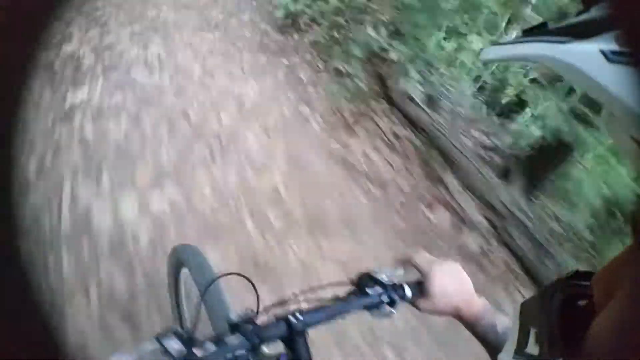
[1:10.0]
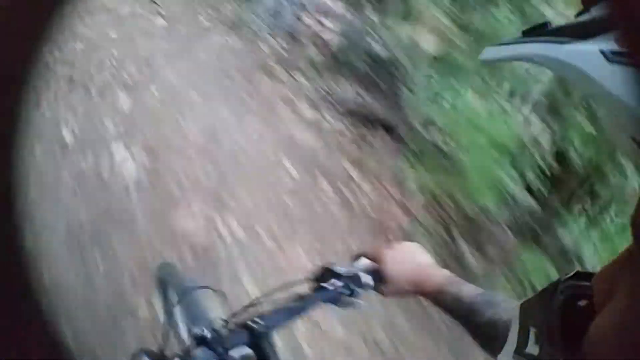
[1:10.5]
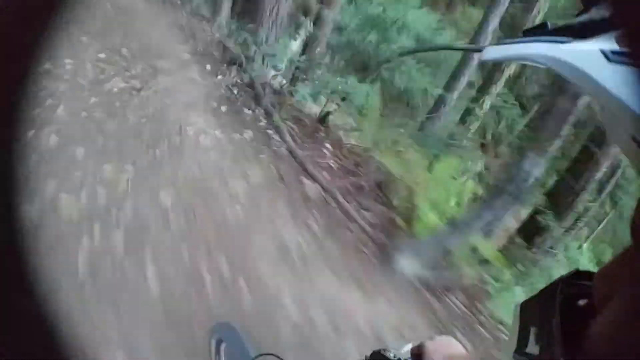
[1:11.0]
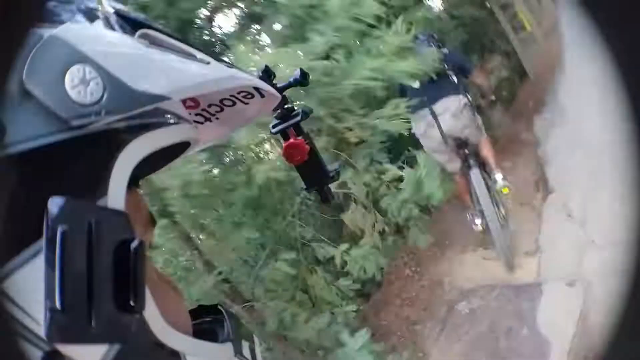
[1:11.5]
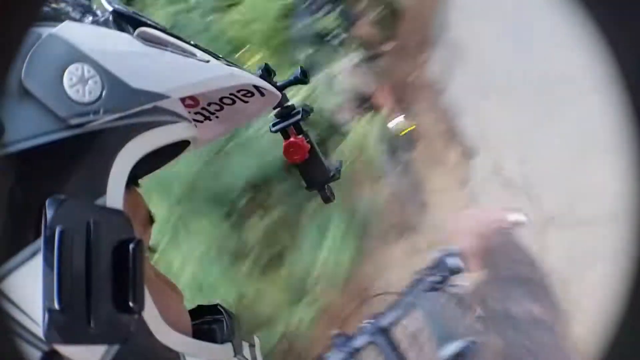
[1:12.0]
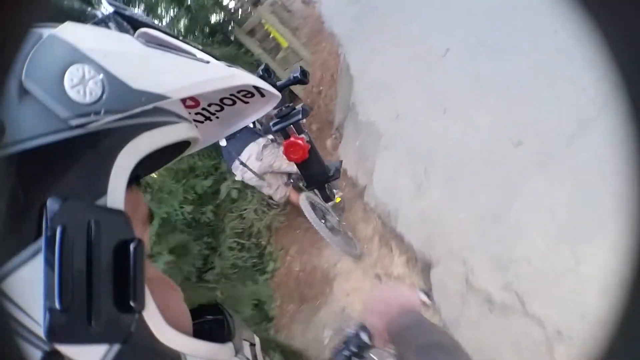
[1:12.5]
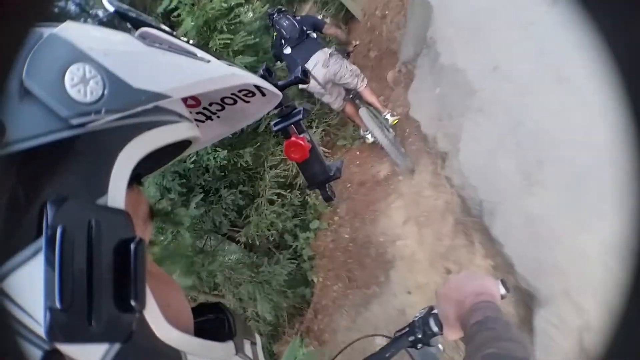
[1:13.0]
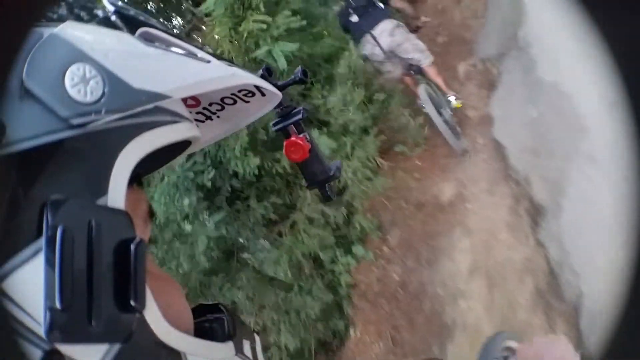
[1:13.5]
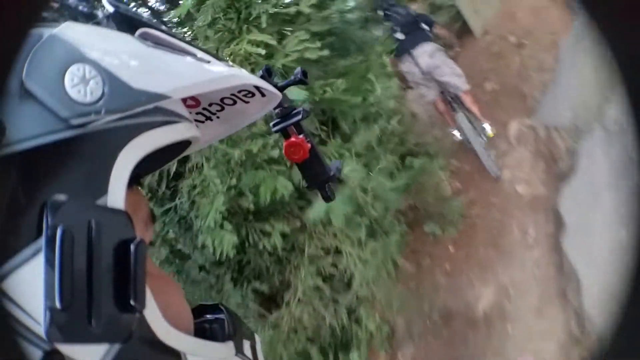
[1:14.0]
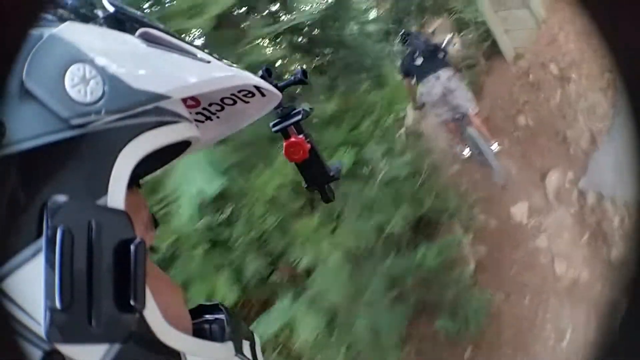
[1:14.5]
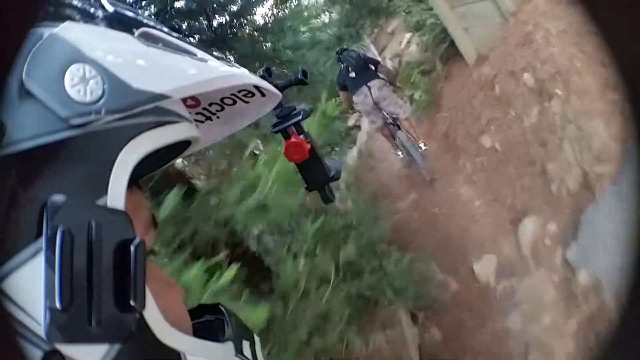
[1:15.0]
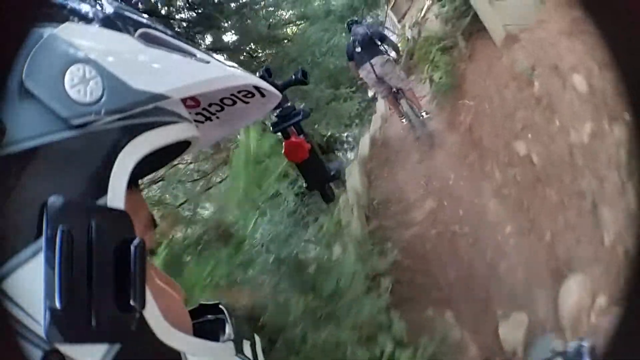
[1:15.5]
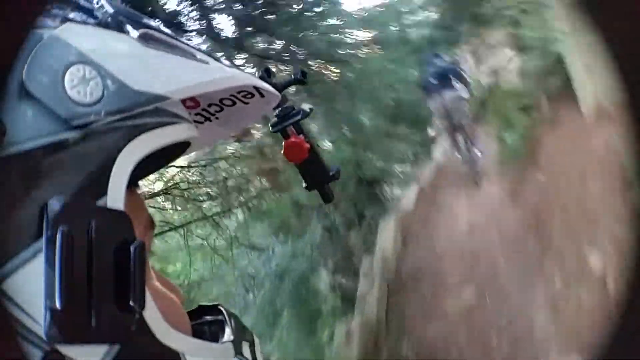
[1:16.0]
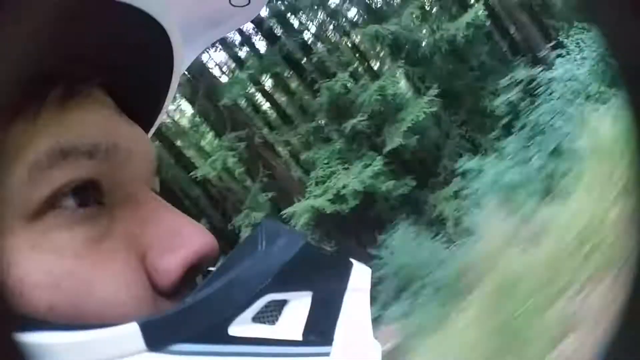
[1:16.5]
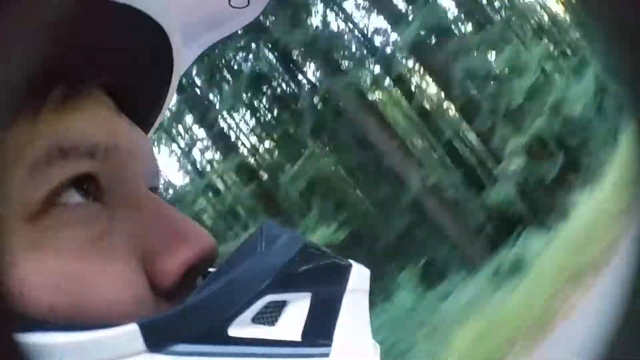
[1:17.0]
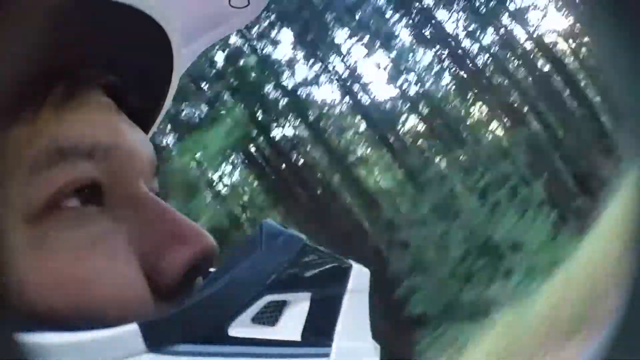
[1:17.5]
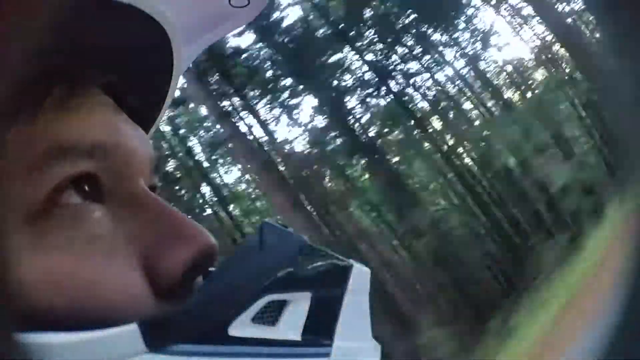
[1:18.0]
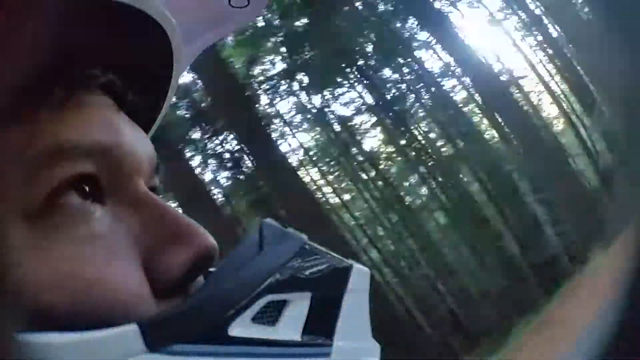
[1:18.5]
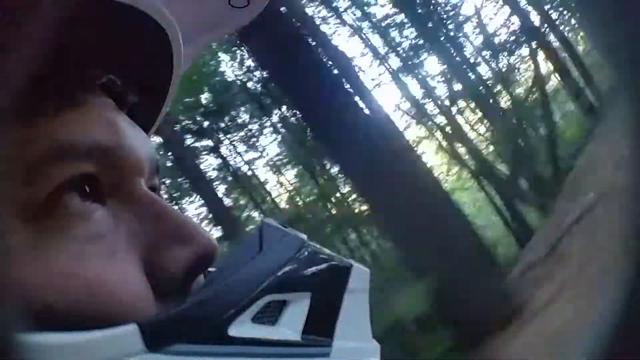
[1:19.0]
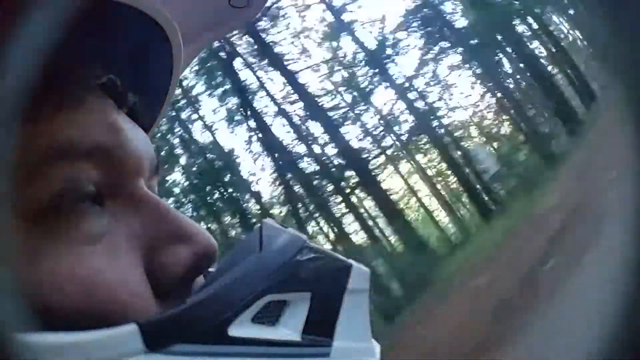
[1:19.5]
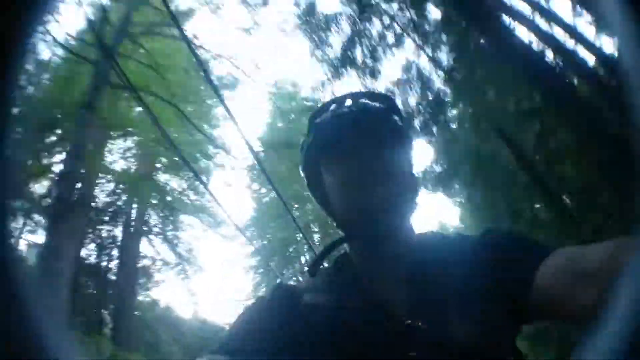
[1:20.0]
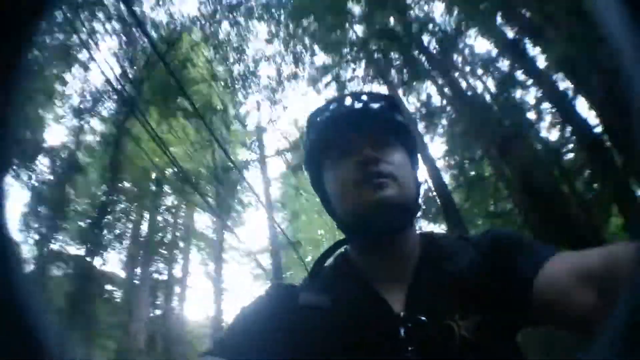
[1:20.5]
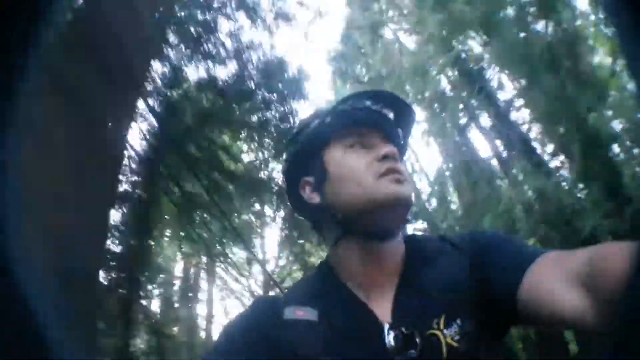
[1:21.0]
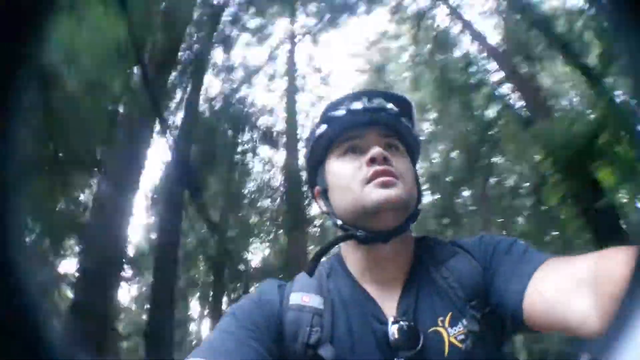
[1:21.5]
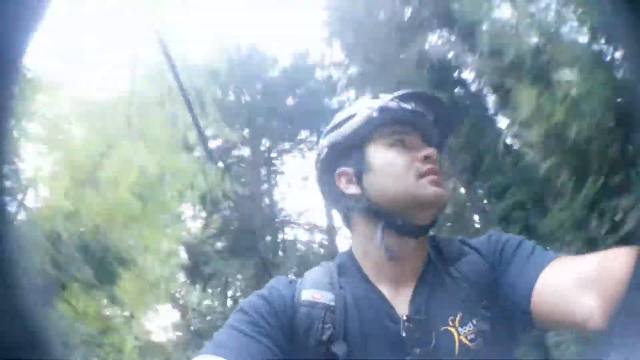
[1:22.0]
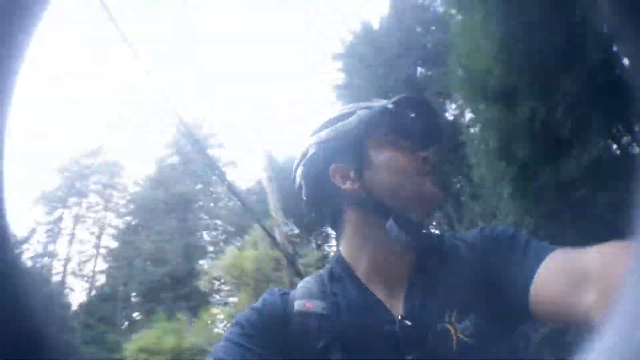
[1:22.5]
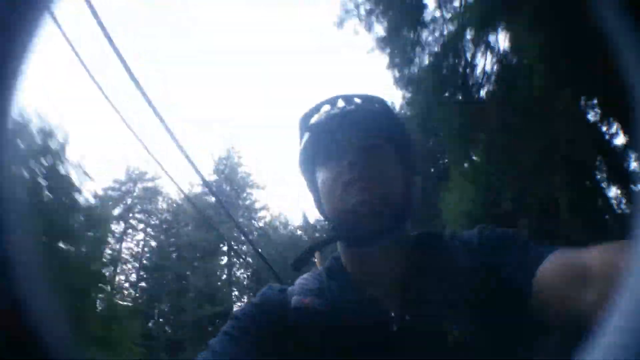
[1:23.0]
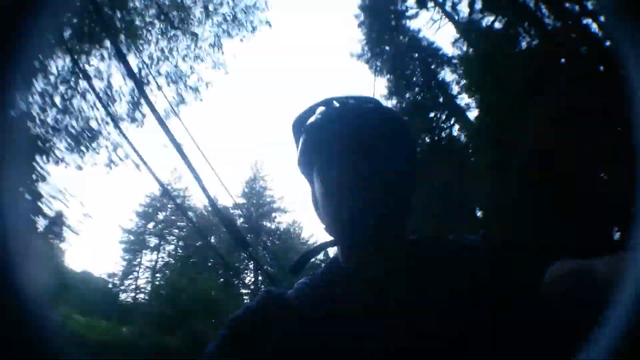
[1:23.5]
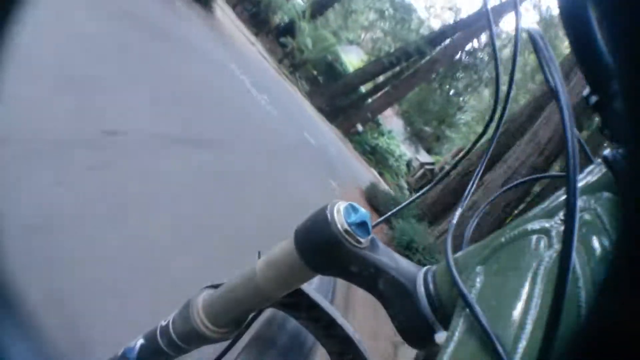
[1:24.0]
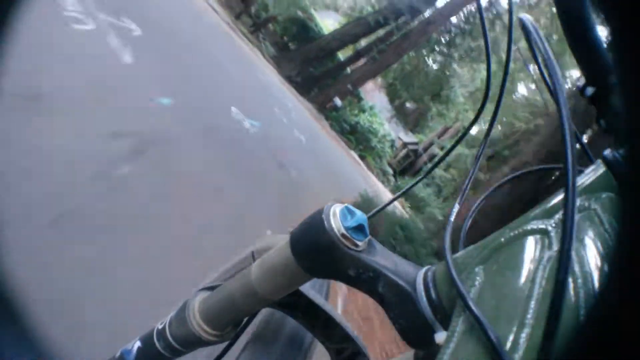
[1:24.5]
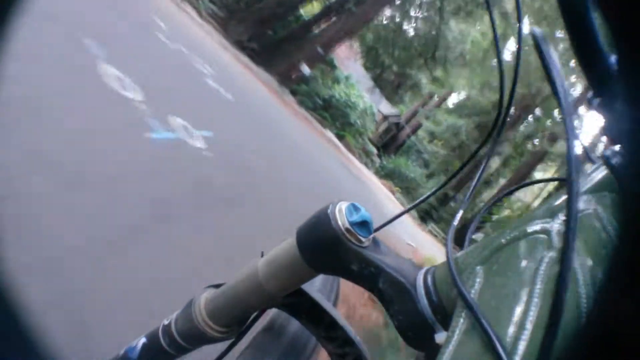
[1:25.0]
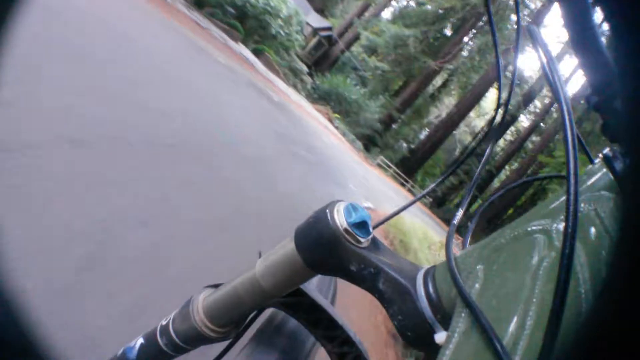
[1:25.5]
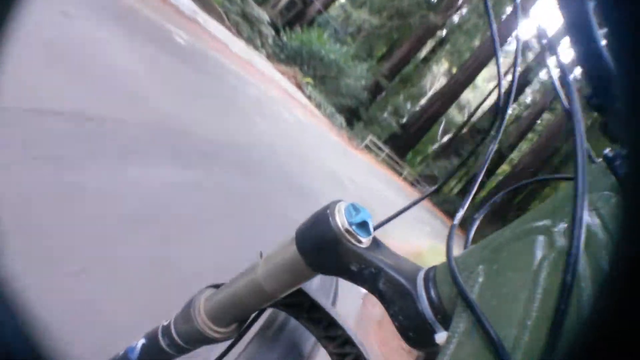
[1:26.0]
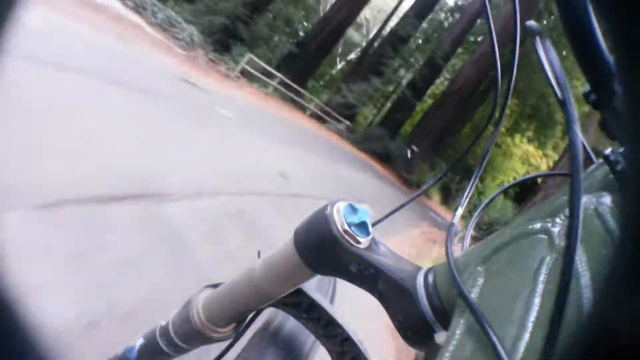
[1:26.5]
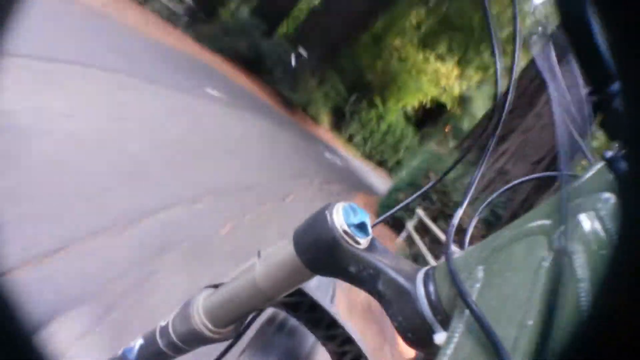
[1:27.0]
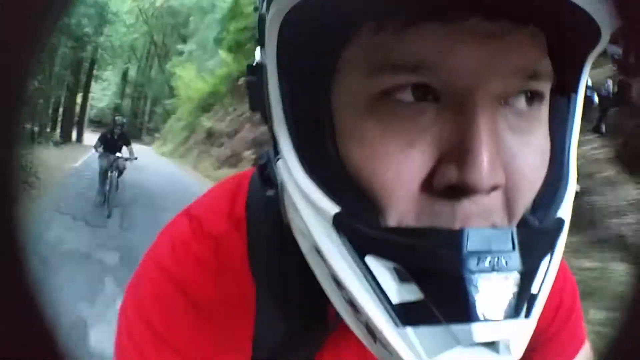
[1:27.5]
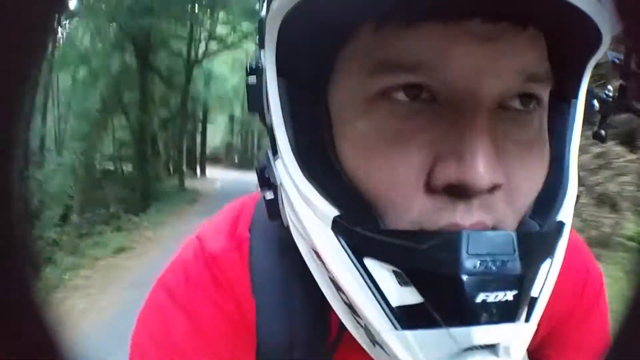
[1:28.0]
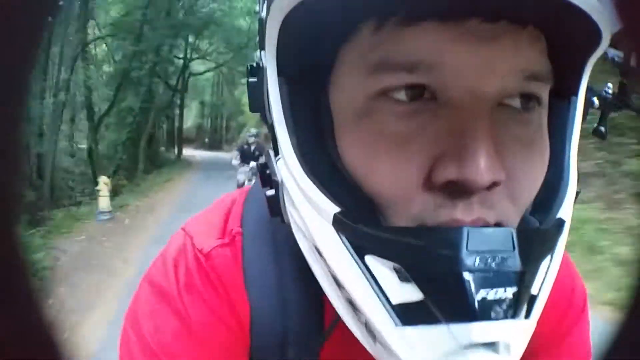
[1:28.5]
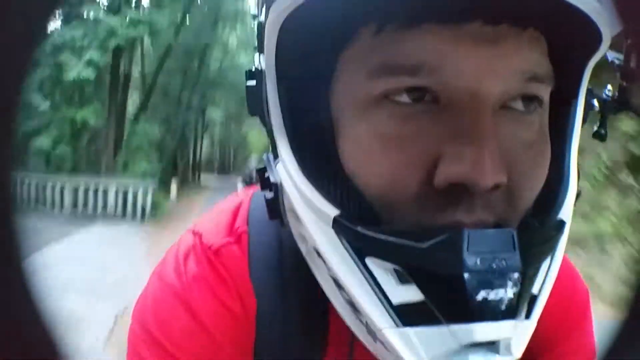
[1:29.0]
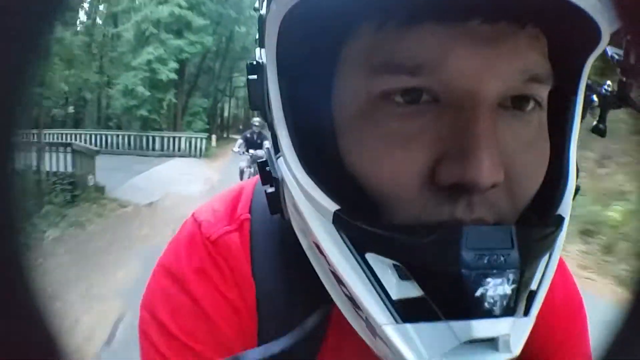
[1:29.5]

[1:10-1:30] A bicyclist wears a helmet equipped with cameras, and a view from the perspective of his body shows the dirt road in front of him. As he pedals, his right hand grips where the brake is. The left side of his white helmet is shown, then the right side. He looks to be in his 20s. The surrounding area is visible as he rides. The man in the red shirt is in the lead; his red shirt has the words "velocity clip" in white text running vertically on the left side. They seem to be pedaling very quickly. The man with the darker hair in the dark shirt looks rapidly from his right to his left.